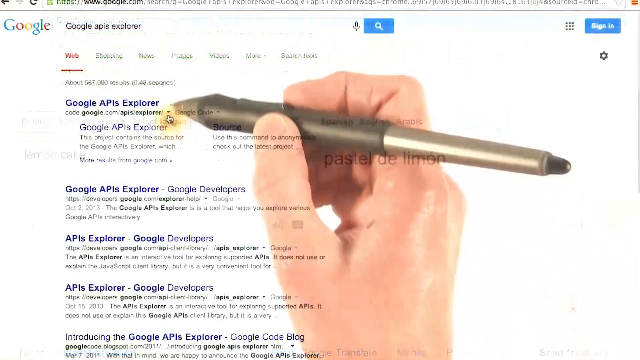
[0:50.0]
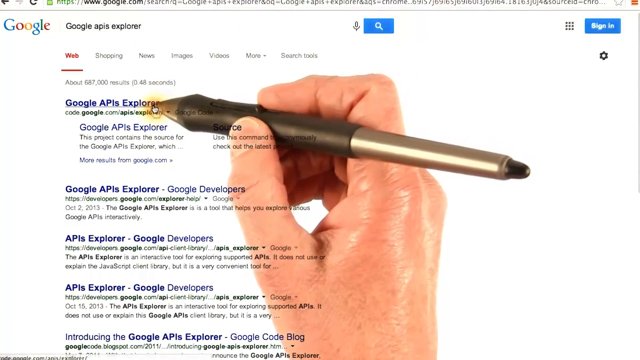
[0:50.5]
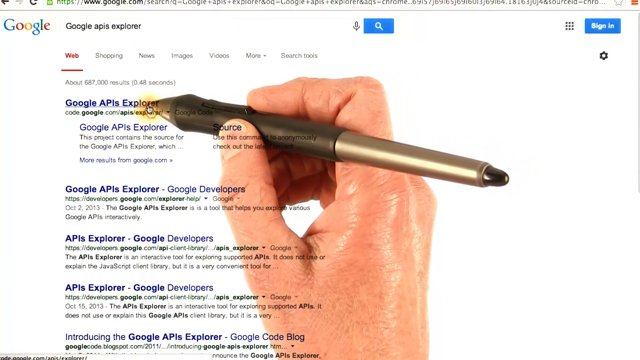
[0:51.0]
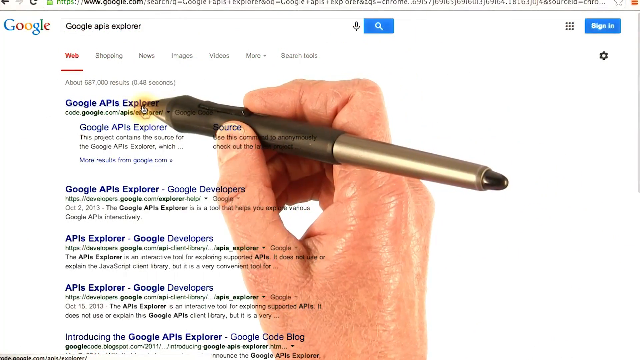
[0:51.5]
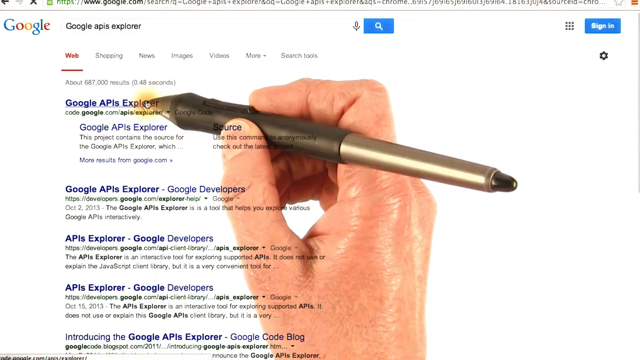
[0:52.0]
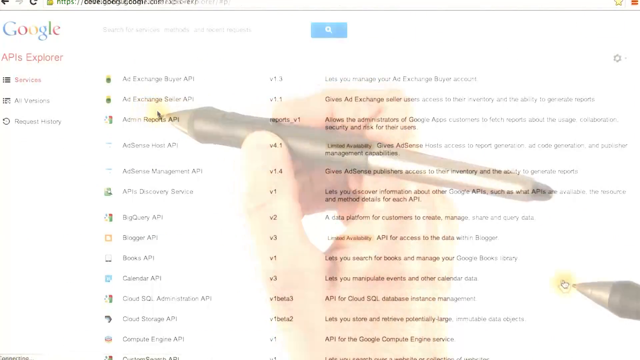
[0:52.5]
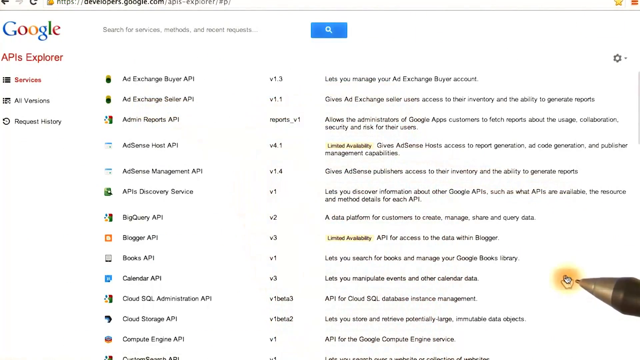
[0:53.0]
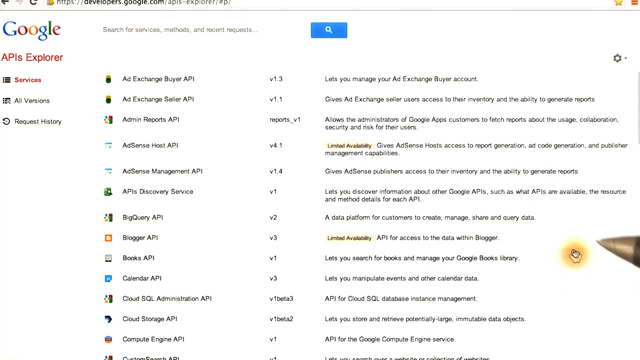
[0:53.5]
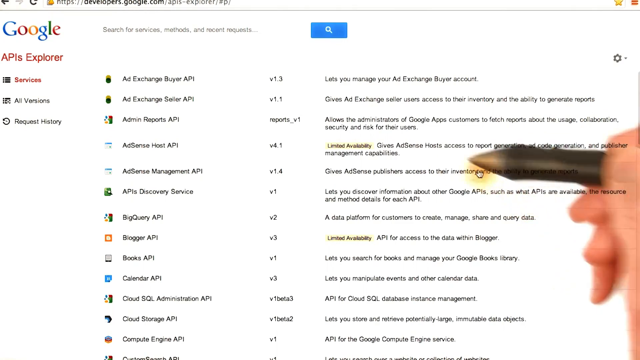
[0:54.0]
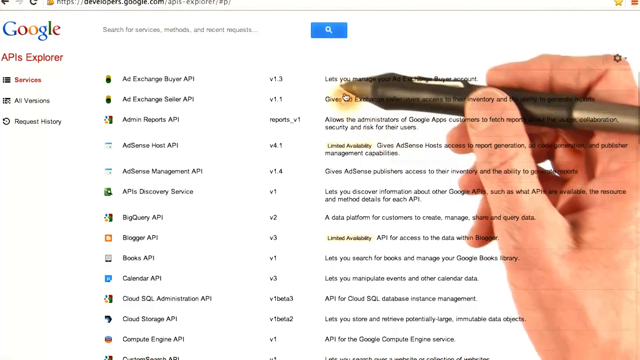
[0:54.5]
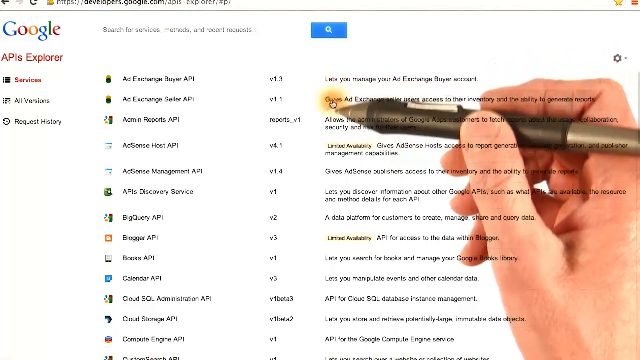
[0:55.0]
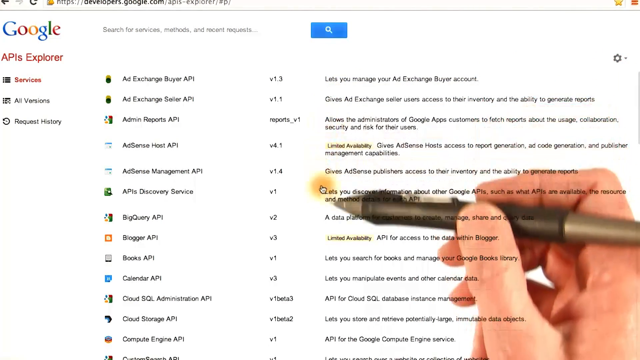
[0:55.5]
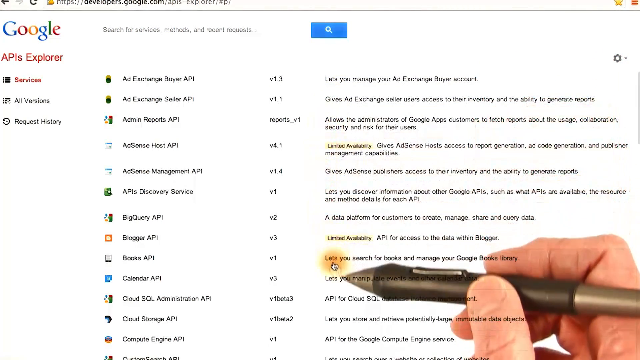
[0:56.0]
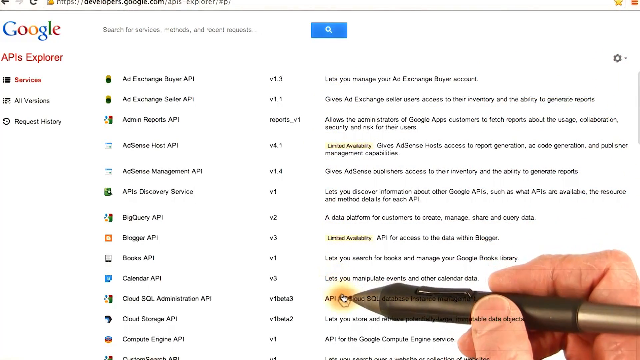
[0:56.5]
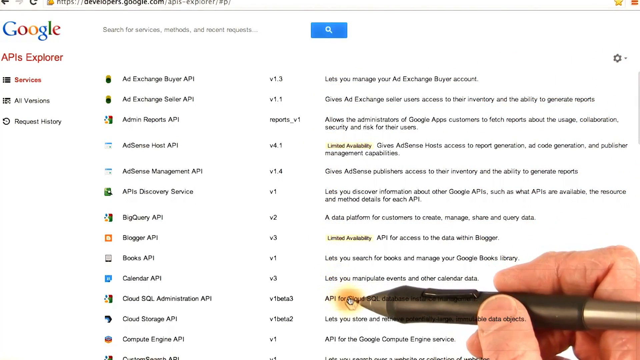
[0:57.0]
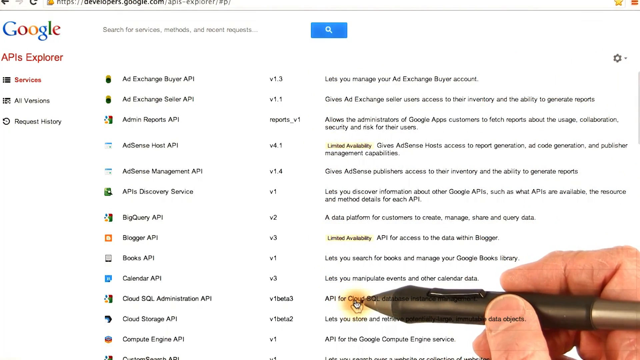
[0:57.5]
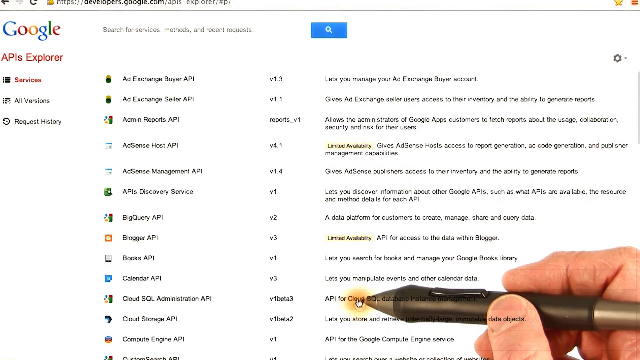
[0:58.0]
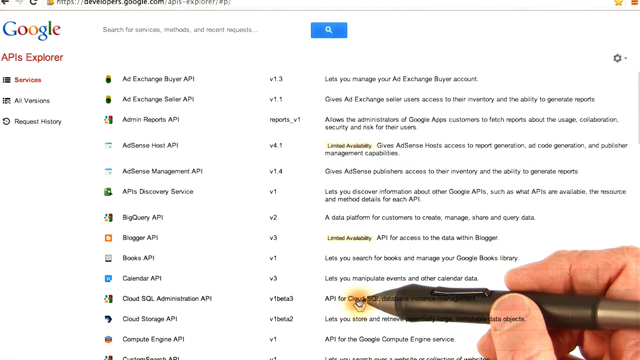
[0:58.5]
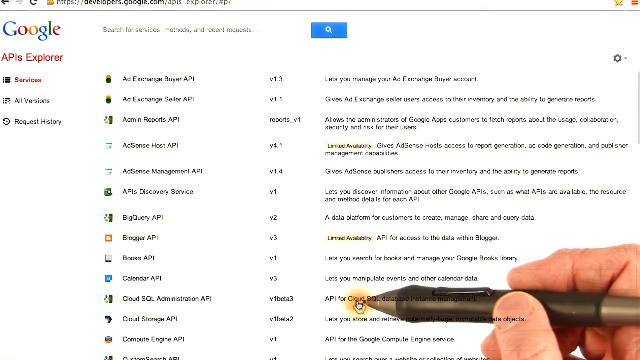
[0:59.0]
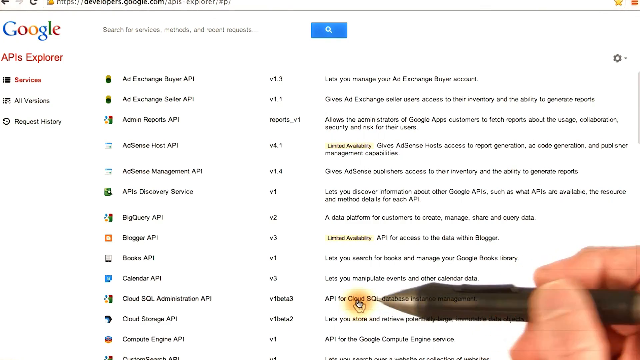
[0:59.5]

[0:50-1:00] A browser shows Google search results for the search term Google APIs Explorer. A transparent human hand holding a pen hovers over the screen, appearing to control the cursor, which is at the tip of the pen. It hovers over the first search result, for Google APIs Explorer at the website code.google.com. The pen and cursor point to the text "Google APIs Explorer" and click on it, bringing up the Google APIs Explorer page, with the Google logo in the top left-hand corner and the red text "APIs Explorer" below it. The page is filled with a list of various Google APIs, and the URL is developers.google.com/apis-explorer. The hand with the pen hovers over the page, pointing at the various entries and moving the cursor down, and stops at an entry for the Cloud SQL Administration API.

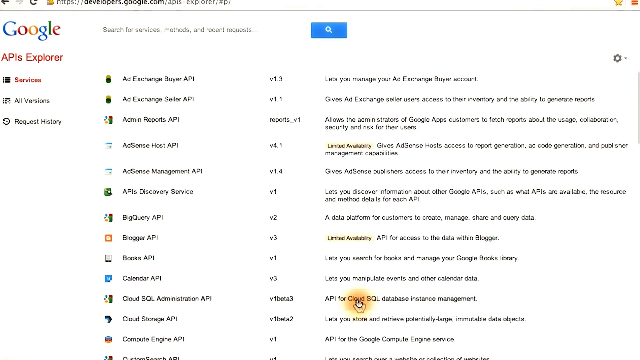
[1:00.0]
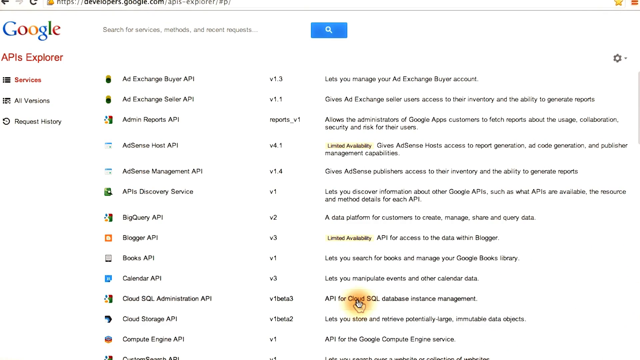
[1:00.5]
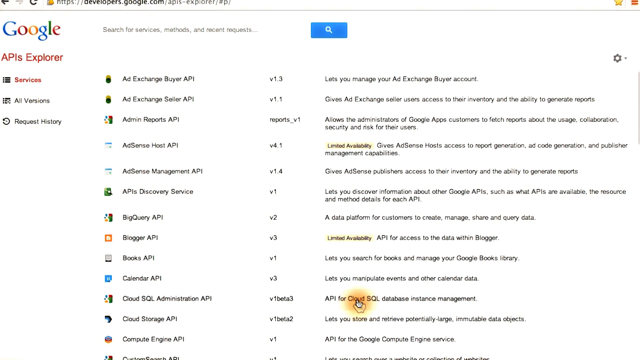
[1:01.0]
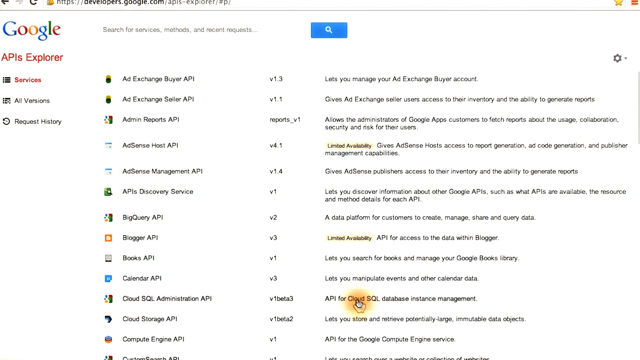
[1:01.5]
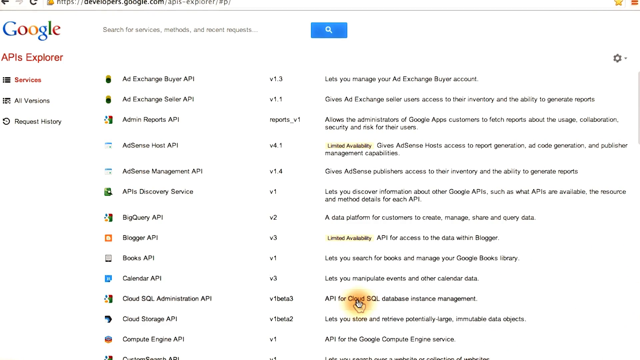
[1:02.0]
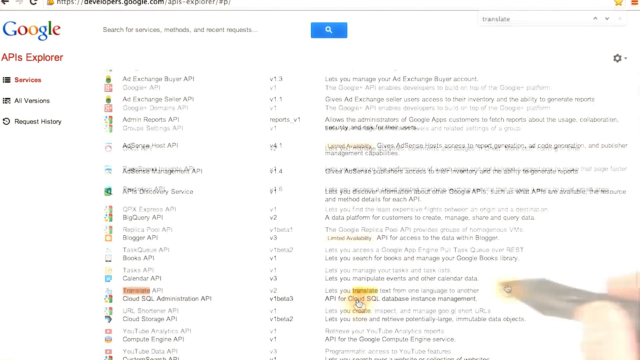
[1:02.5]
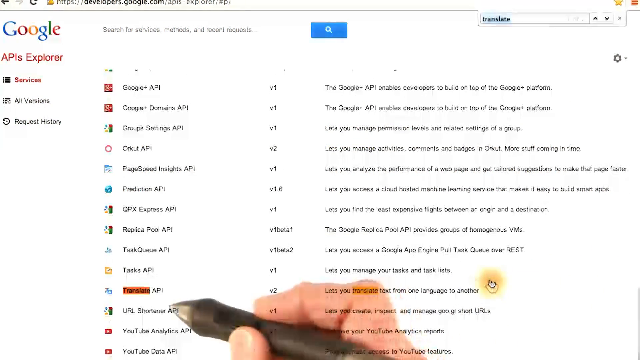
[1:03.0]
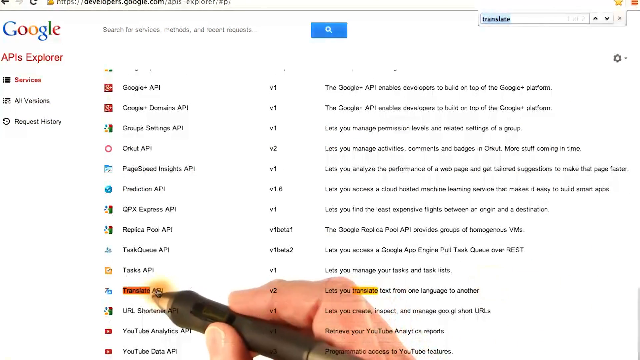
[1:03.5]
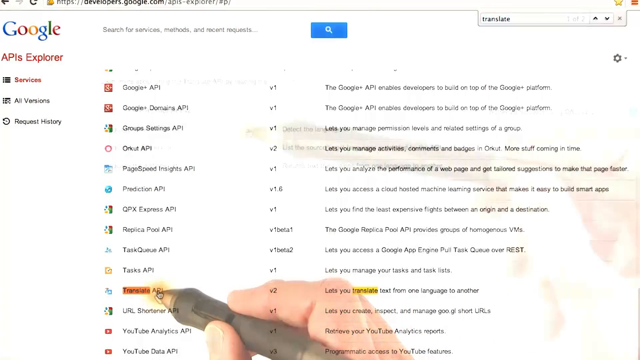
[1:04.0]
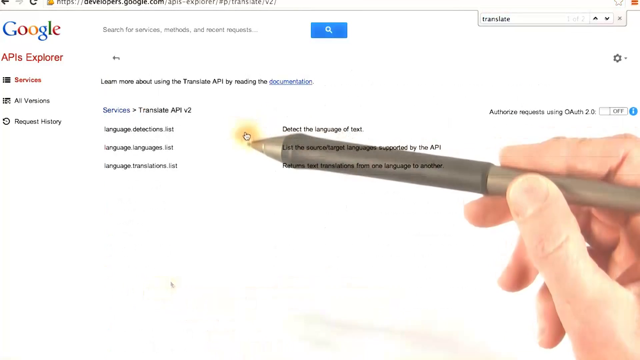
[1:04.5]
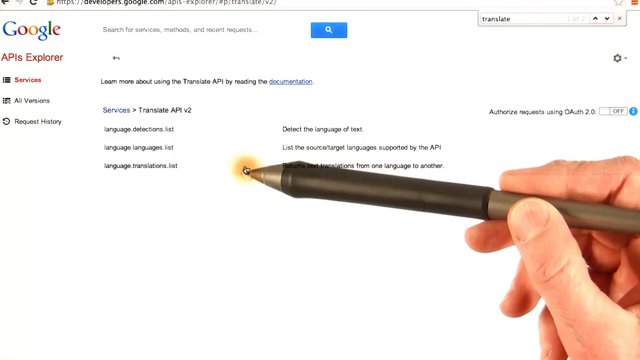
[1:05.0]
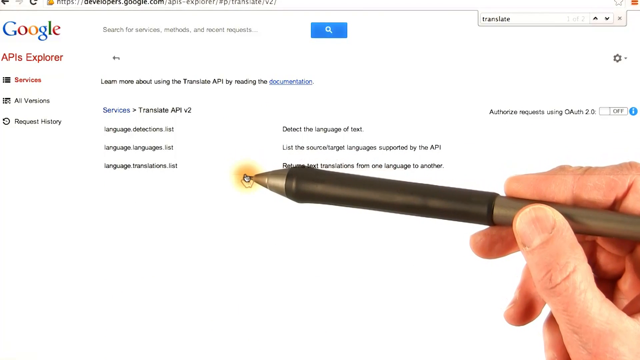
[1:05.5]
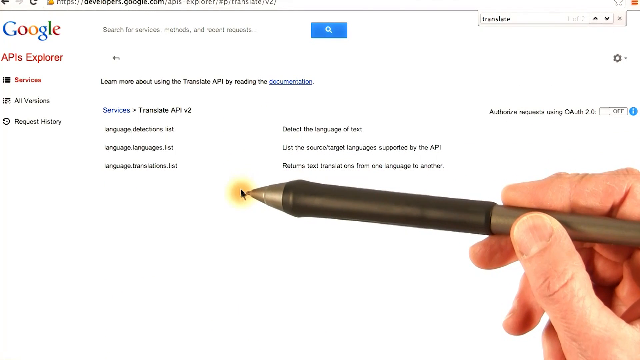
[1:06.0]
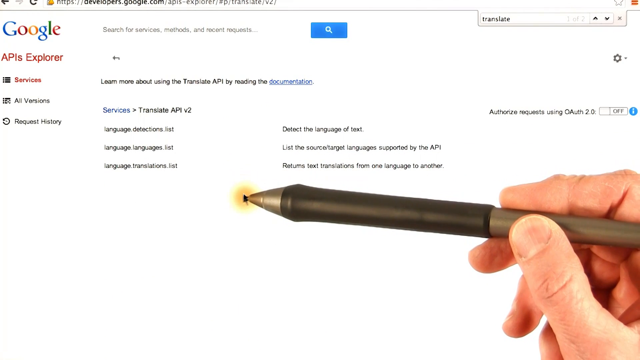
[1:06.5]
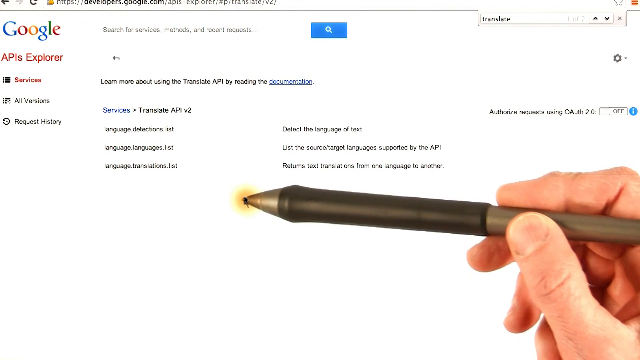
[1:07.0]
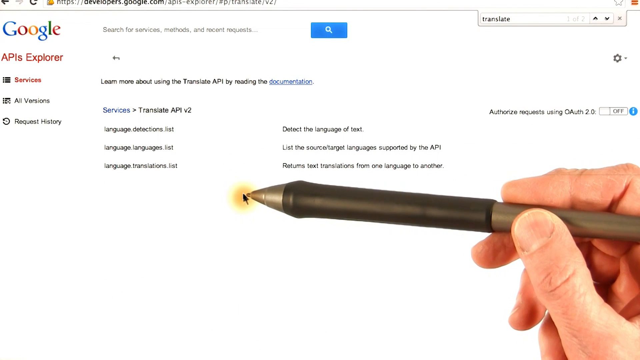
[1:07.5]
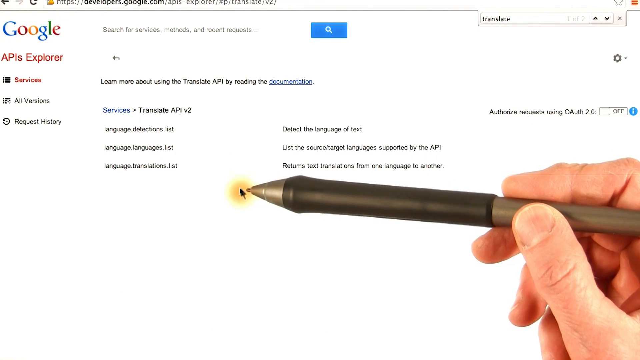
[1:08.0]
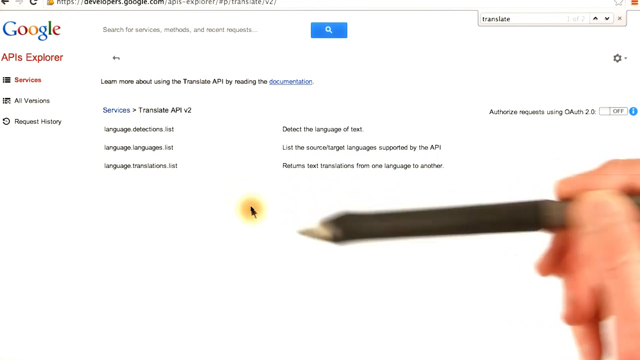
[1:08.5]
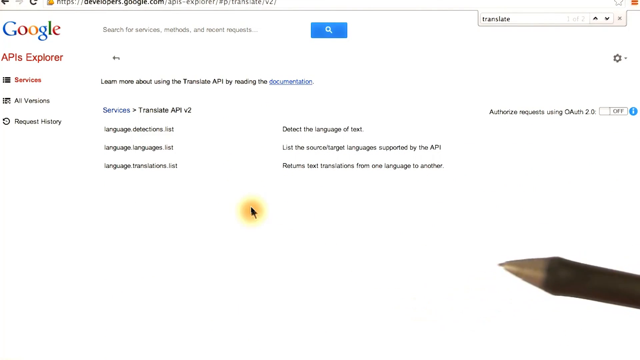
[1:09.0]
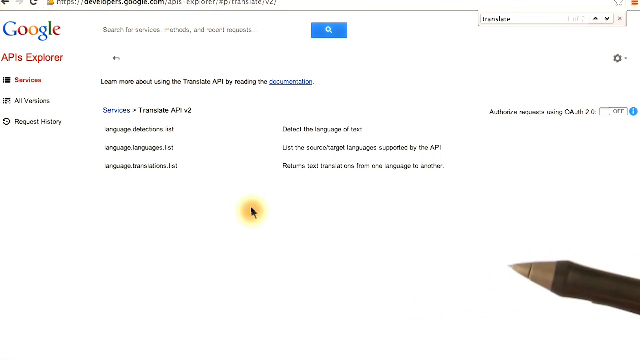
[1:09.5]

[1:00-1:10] The browser is on the URL developers.google.com/apis-explorer, the Google APIs Explorer page, which lists various APIs related to Google services. The mouse pointer is hovering over the entry for Cloud SQL Administration API. A human hand holding a pen appears on the screen, and the pen appears to move the mouse cursor with it. It hovers over and highlights the Google Translate API entry and clicks on it, opening a page for the Translate API with the text "learn more about using the Translate API by reading the documentation" and listing three services: "detect the language of text", "list the source/target languages supported by the API" and "return text translations from one language to another". The hand hovers over these items as if discussing them.